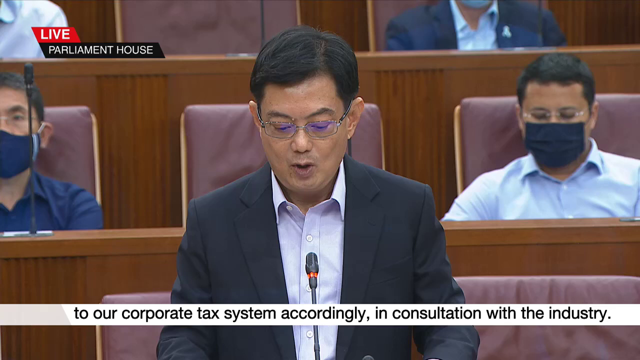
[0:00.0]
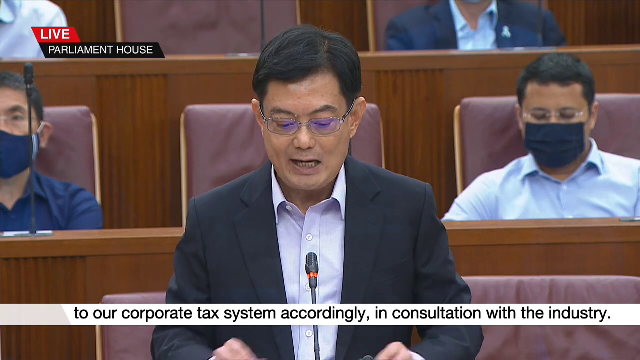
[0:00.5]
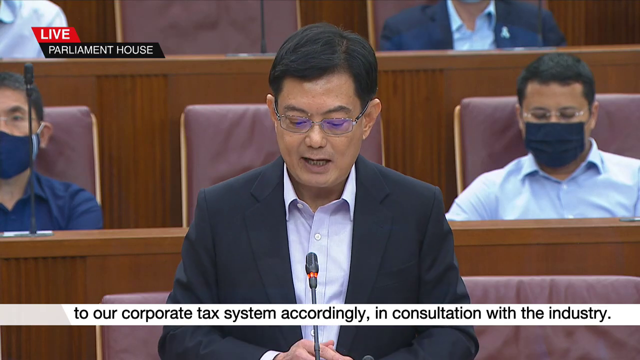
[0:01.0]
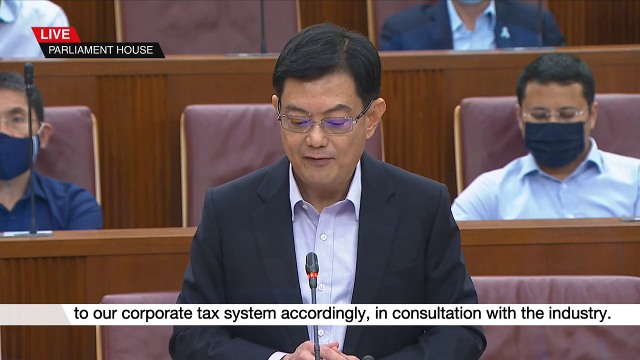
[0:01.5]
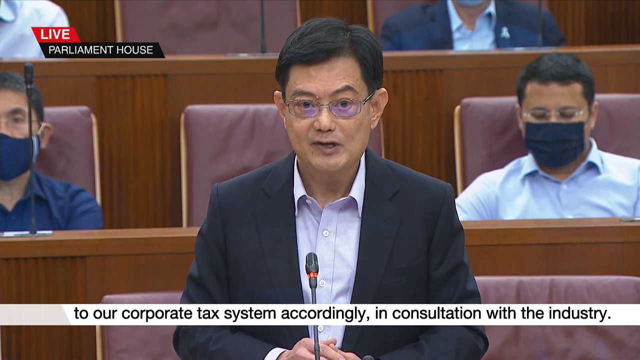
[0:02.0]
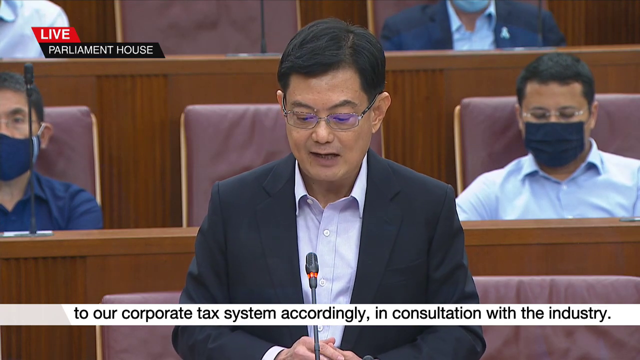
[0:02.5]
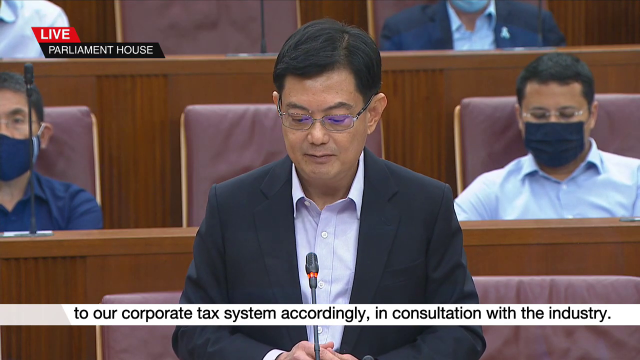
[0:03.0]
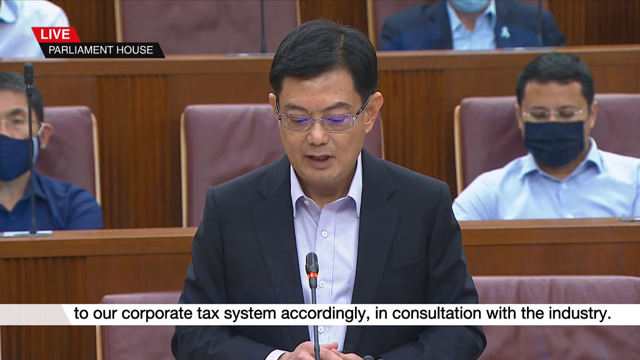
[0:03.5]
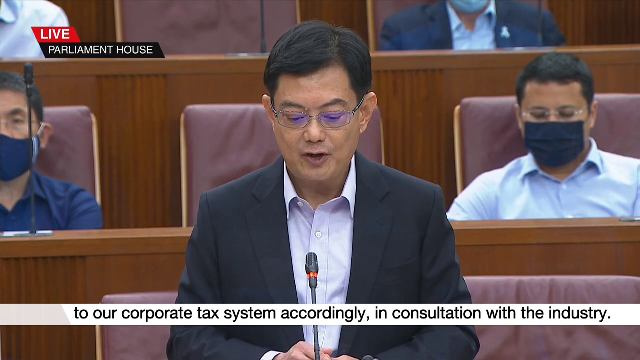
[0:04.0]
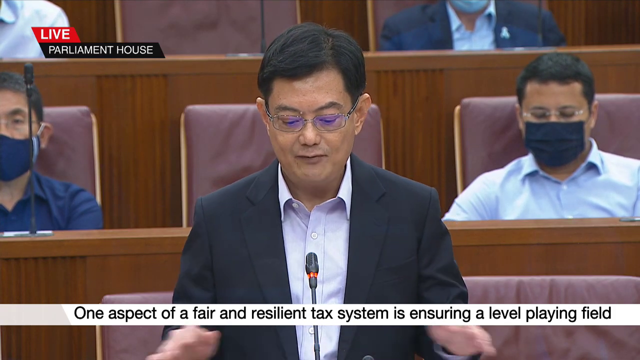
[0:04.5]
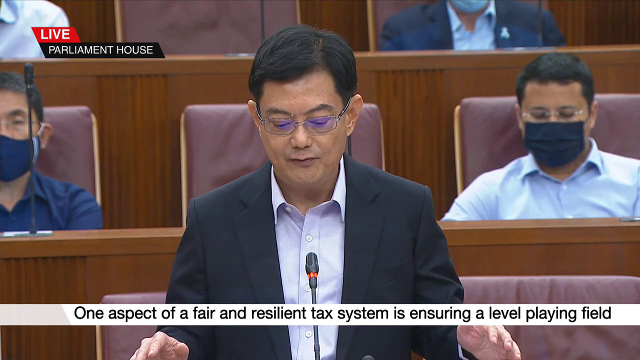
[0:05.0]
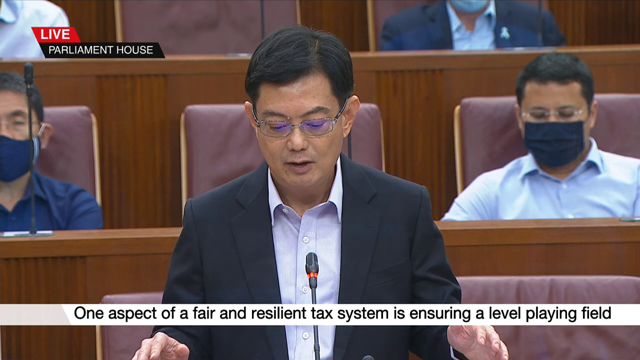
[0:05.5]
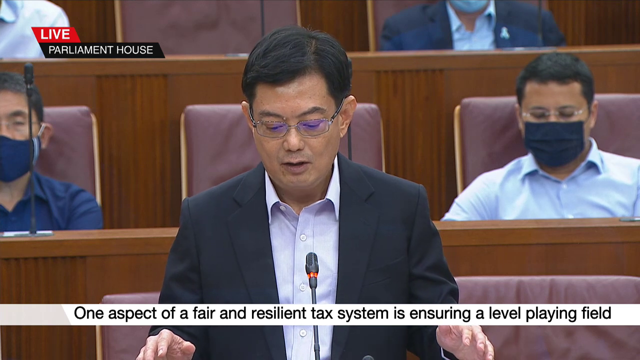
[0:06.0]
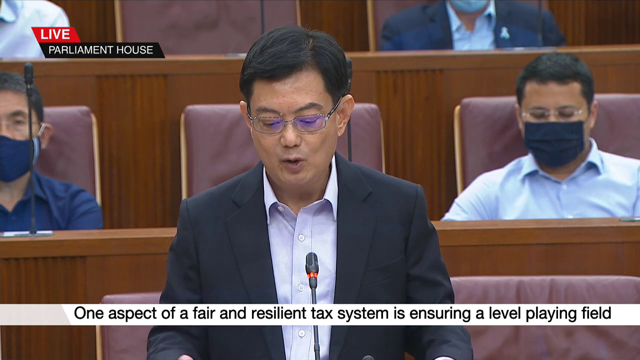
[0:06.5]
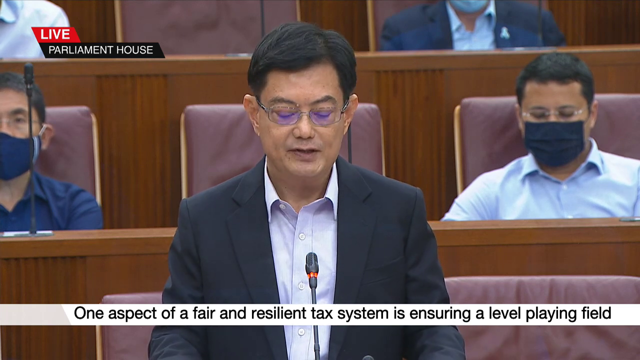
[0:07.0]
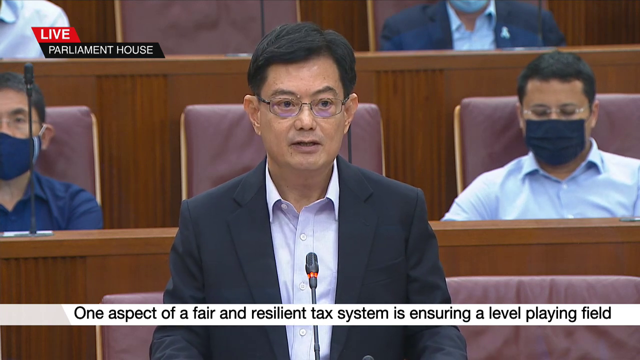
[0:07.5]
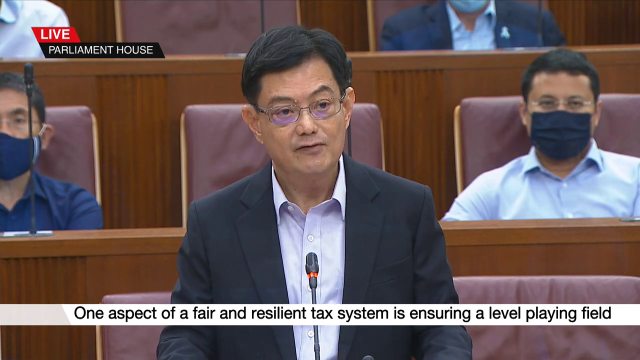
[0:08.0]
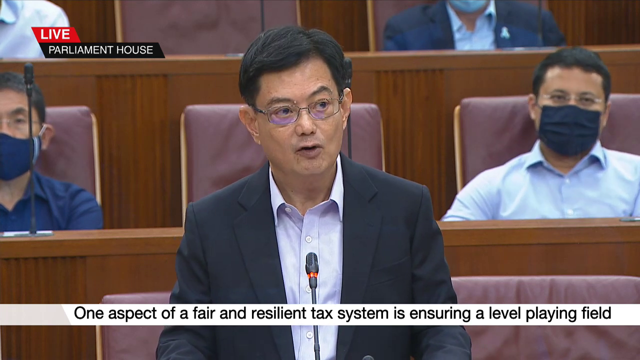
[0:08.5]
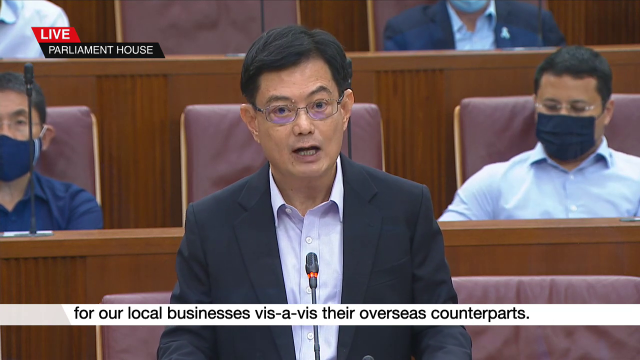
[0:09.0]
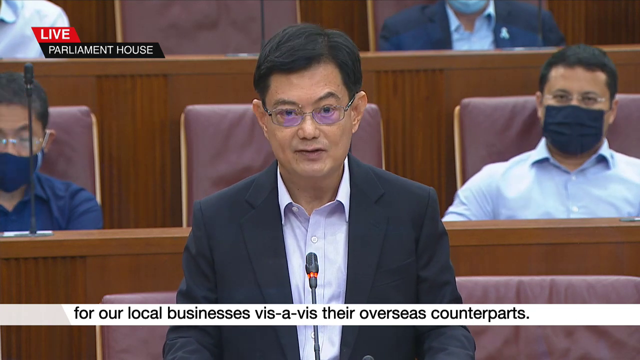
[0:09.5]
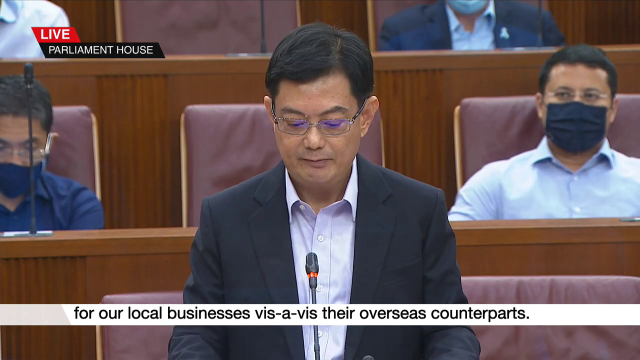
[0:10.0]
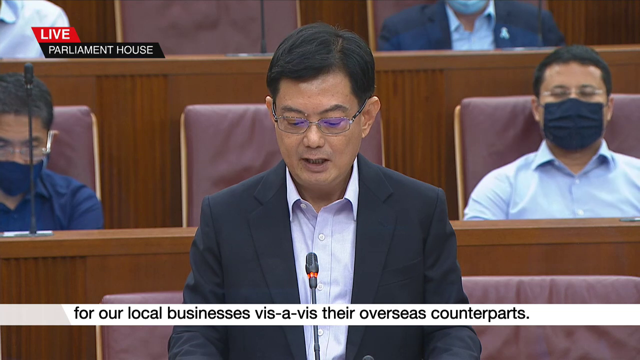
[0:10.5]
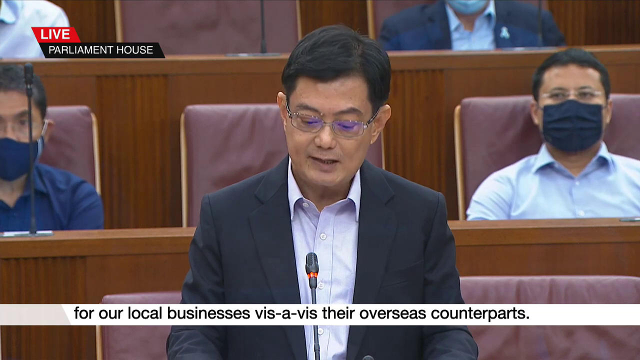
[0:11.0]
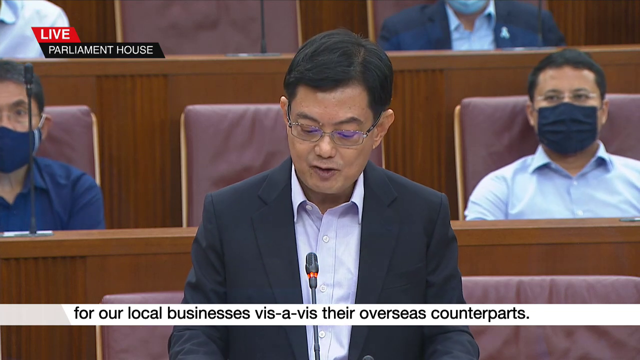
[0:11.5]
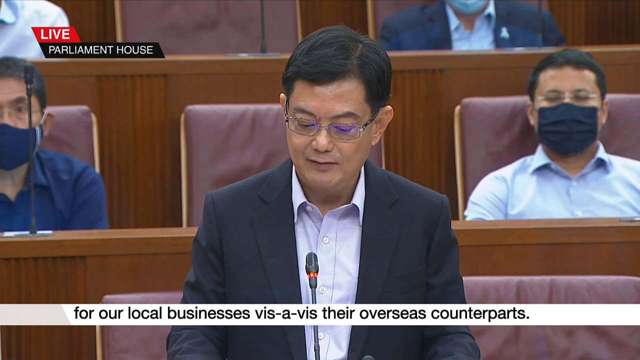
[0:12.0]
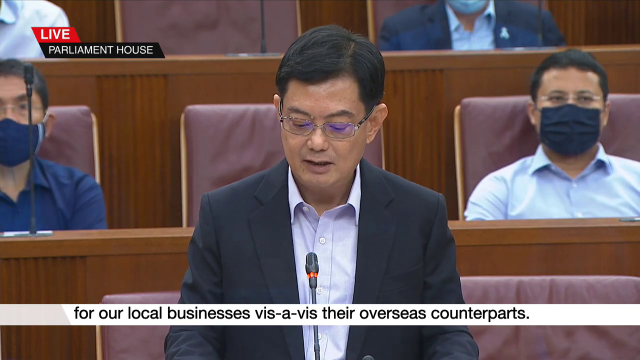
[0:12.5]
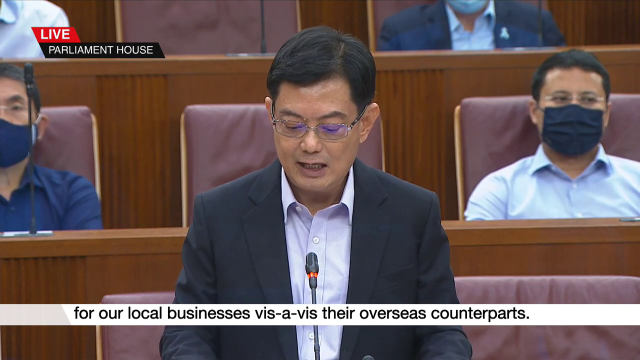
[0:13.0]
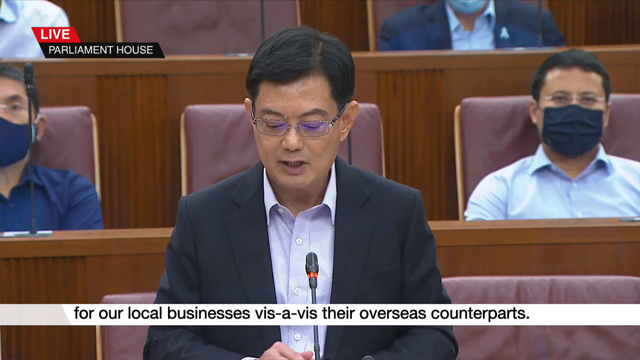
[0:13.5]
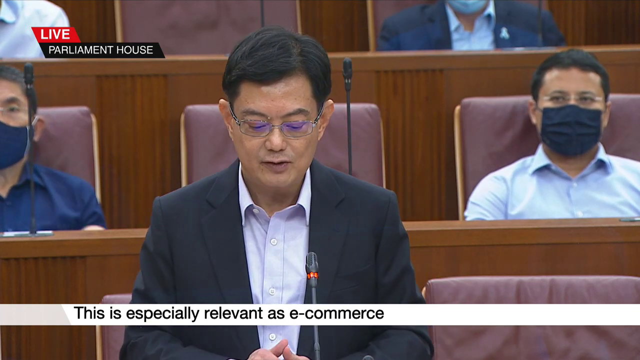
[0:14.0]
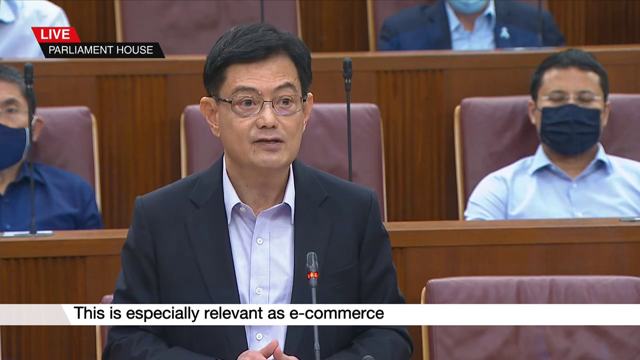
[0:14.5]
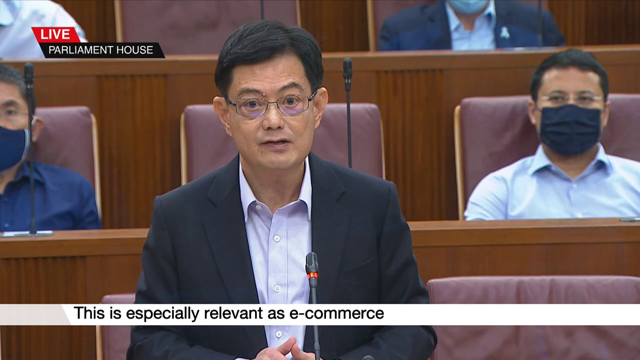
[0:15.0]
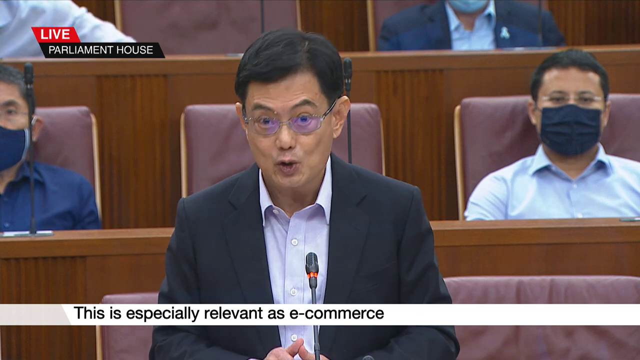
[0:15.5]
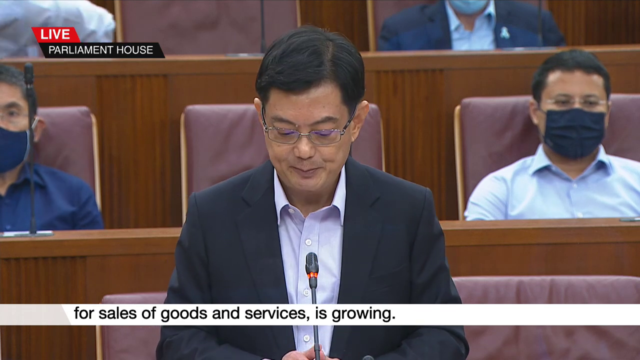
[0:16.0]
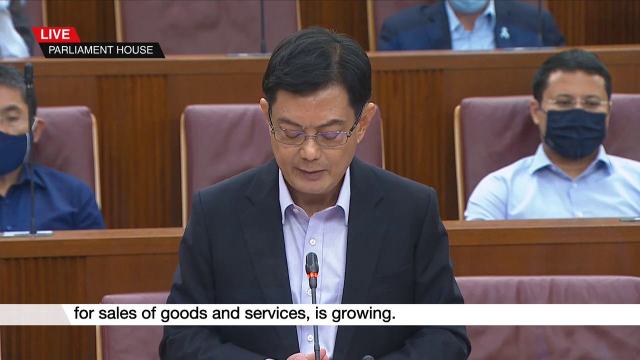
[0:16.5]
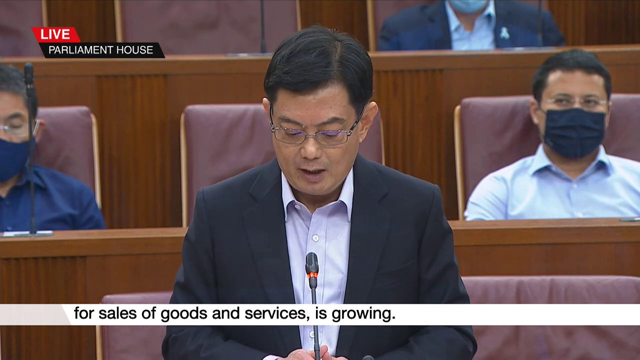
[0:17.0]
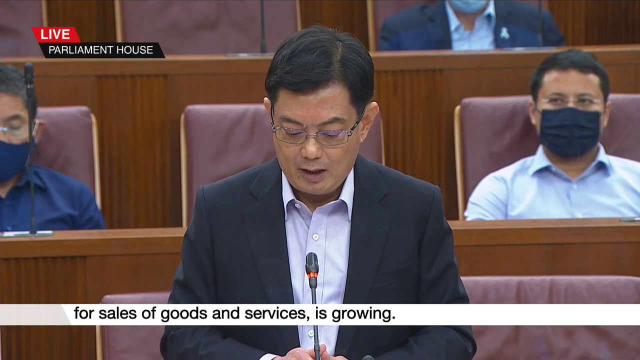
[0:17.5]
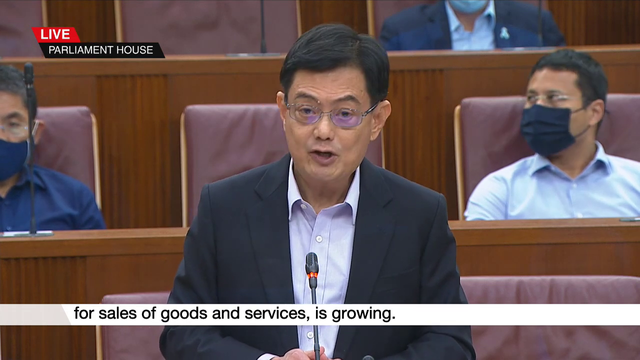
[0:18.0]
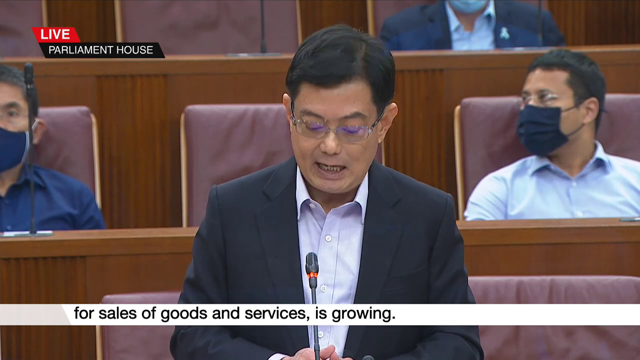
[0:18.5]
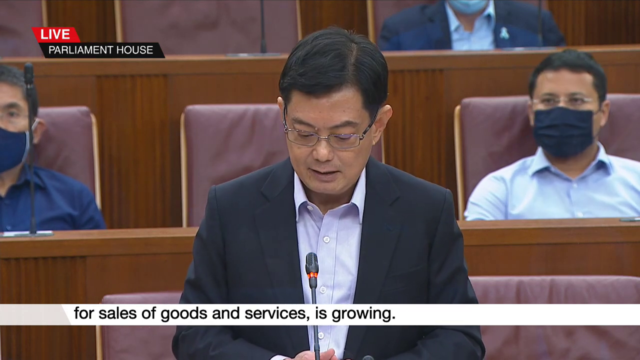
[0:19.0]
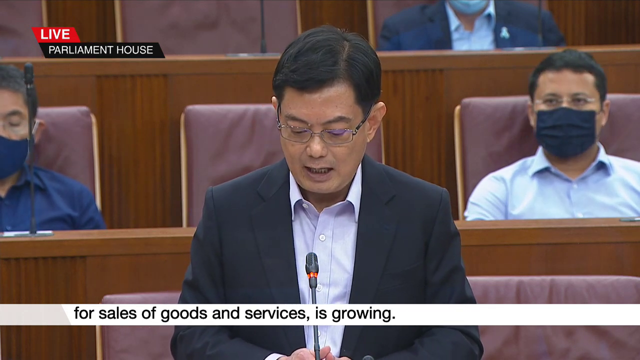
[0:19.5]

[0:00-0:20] An Asian man stands in a parliament chamber, apparently standing to address the room and speaking into a microphone; his chair is not far behind him. A banner in the upper left-hand corner reads "live parliament house." Two men are in a row behind him, and two more are in rows behind that. The walls have wooden paneled rails, and there are microphones in front of each person. He wears a navy blue blazer, a light blue dress shirt and thin metal-framed glasses, and his short black hair is parted on the side. A transcription runs across the bottom of the screen in small black font on a white strip: "One aspect of fair trade and resilient tax system is ensuring a level playing field for local businesses vis-a-vis their overseas counterparts. This is especially relevant as e-commerce for sale of goods and services is growing."